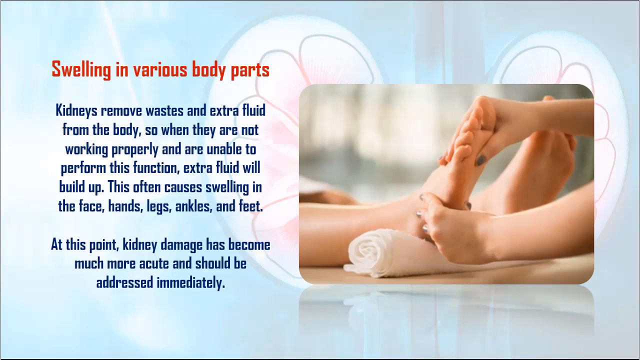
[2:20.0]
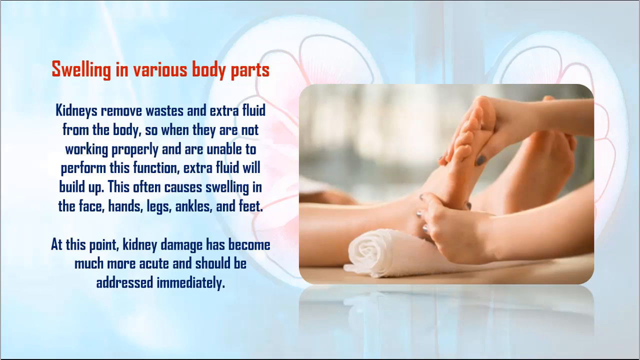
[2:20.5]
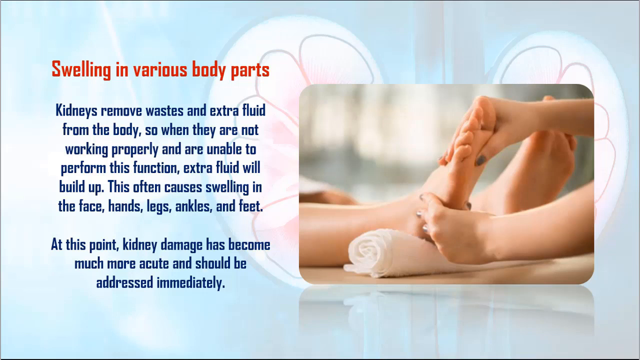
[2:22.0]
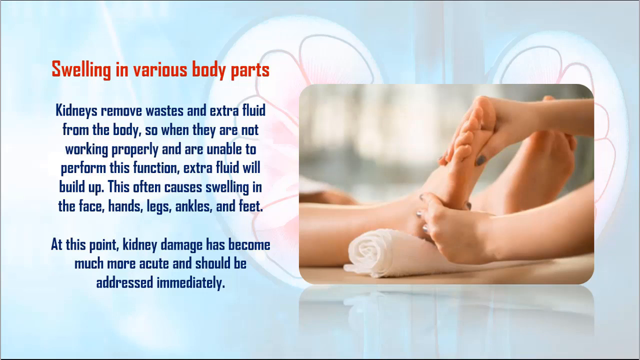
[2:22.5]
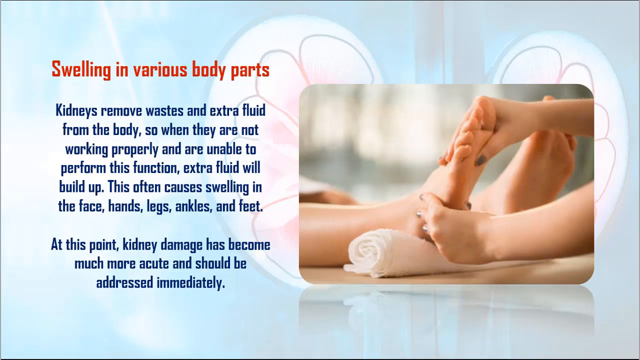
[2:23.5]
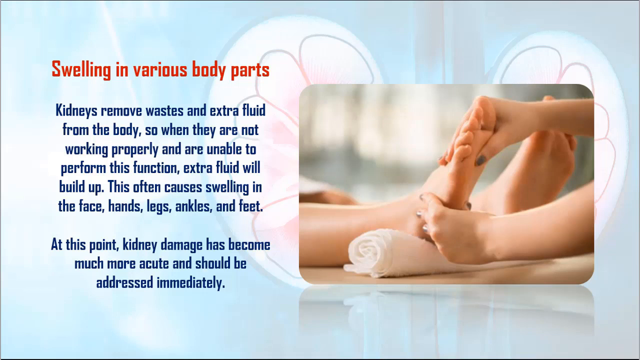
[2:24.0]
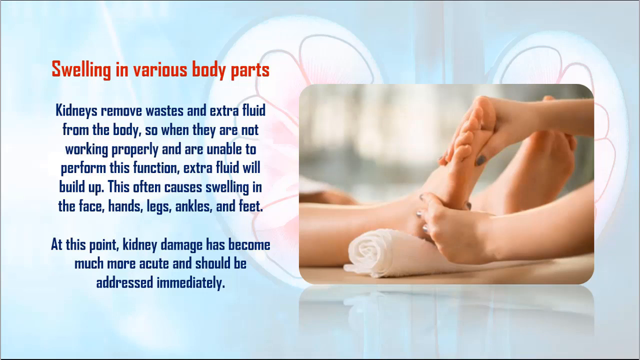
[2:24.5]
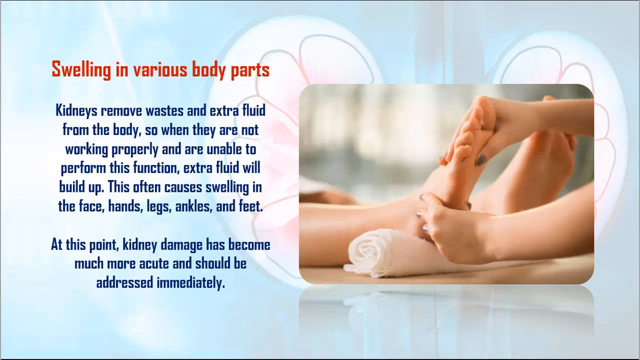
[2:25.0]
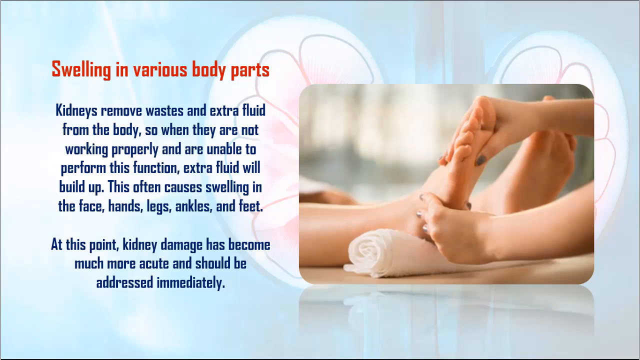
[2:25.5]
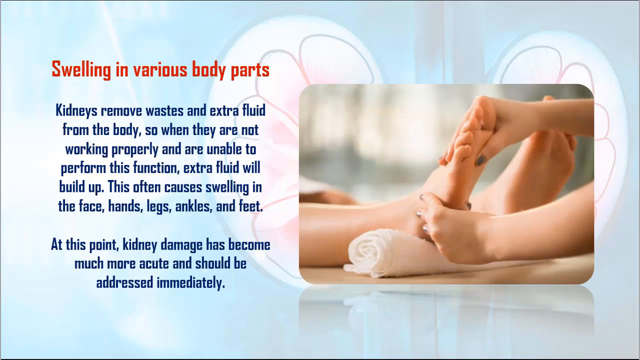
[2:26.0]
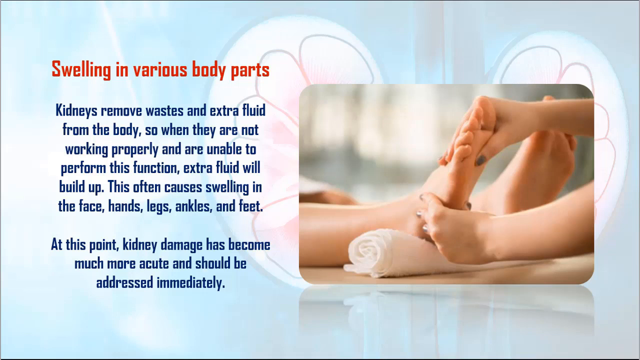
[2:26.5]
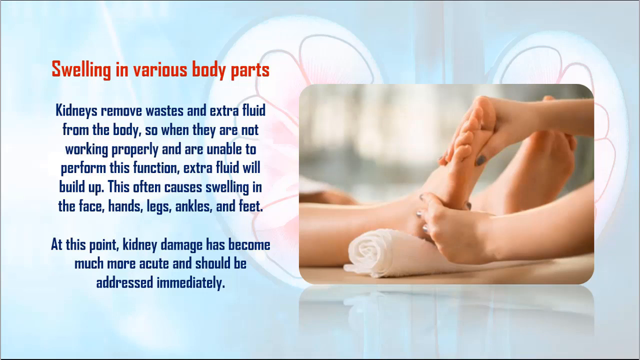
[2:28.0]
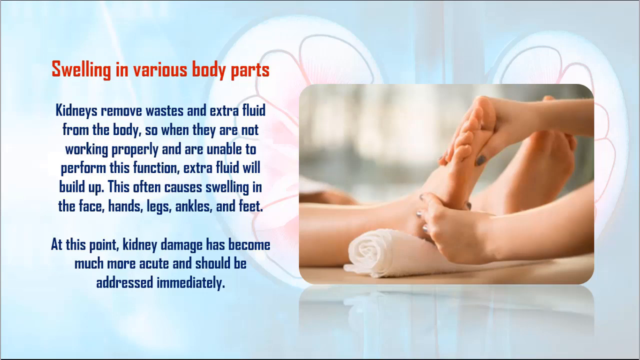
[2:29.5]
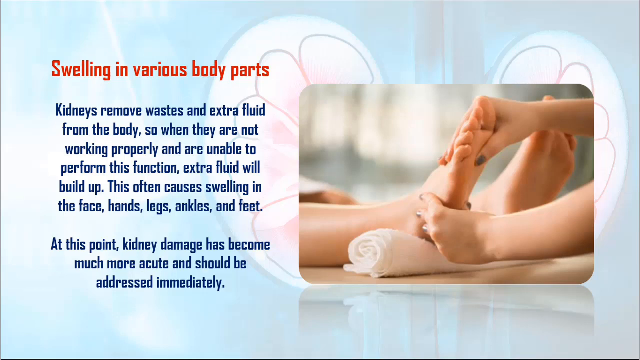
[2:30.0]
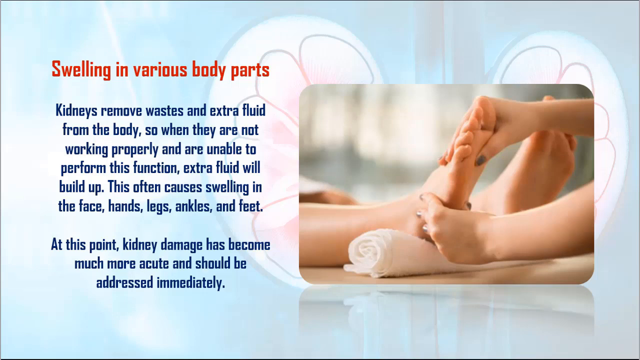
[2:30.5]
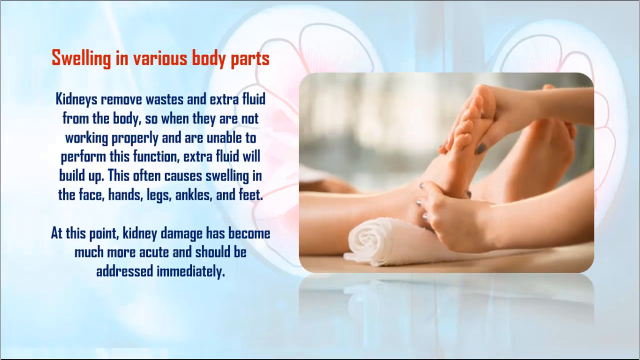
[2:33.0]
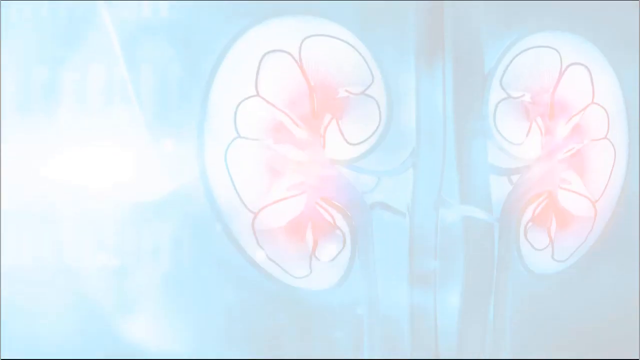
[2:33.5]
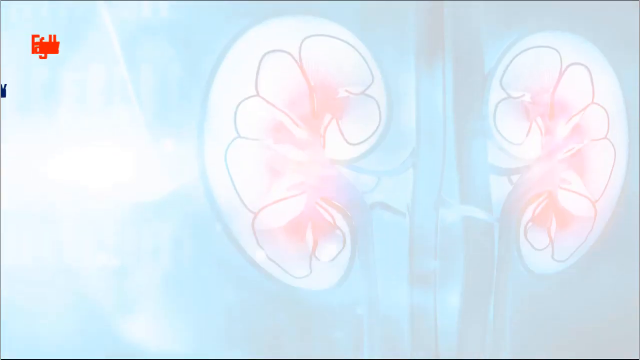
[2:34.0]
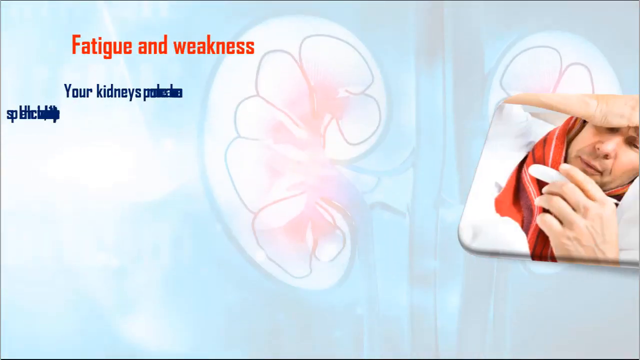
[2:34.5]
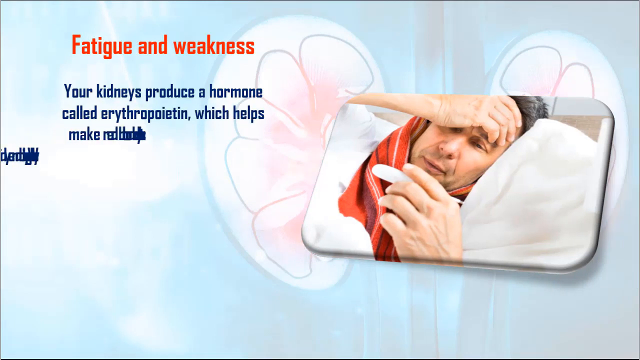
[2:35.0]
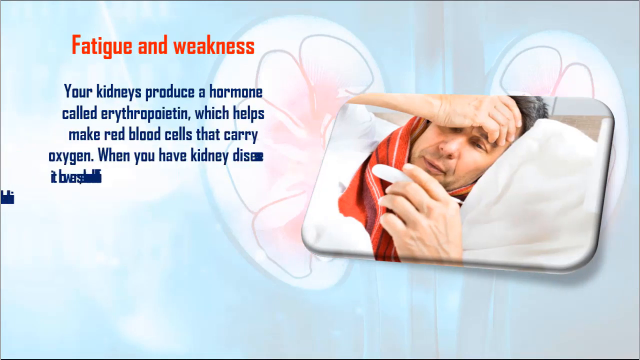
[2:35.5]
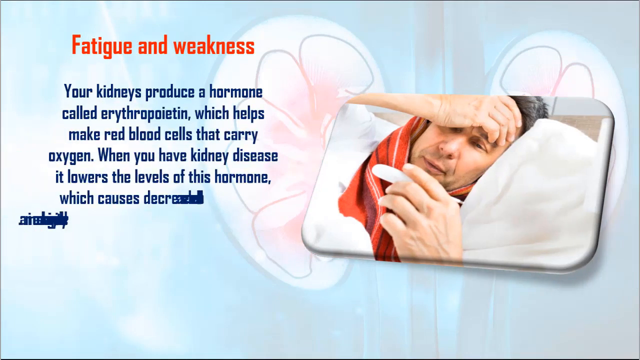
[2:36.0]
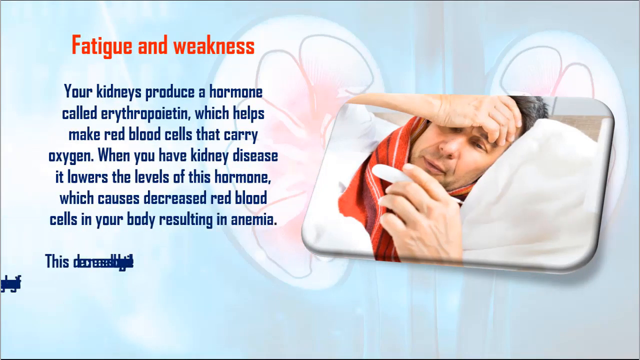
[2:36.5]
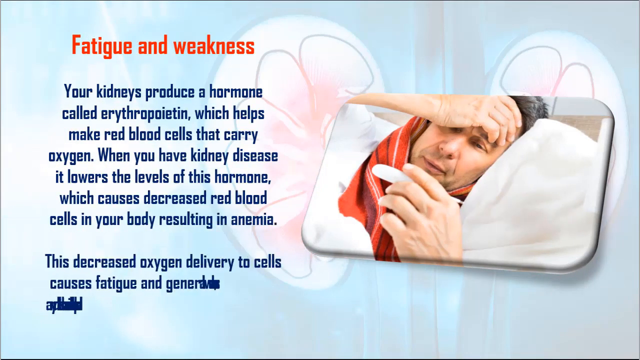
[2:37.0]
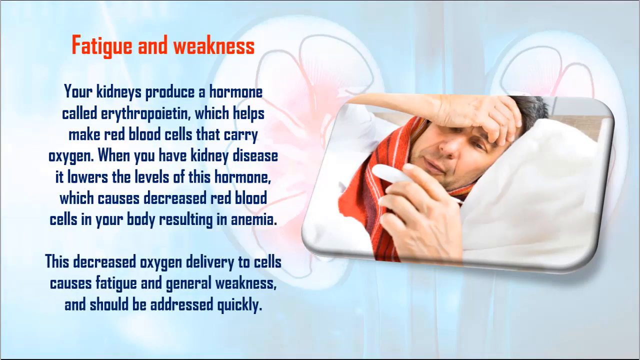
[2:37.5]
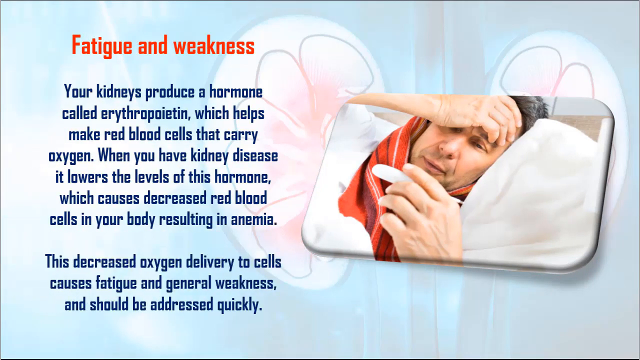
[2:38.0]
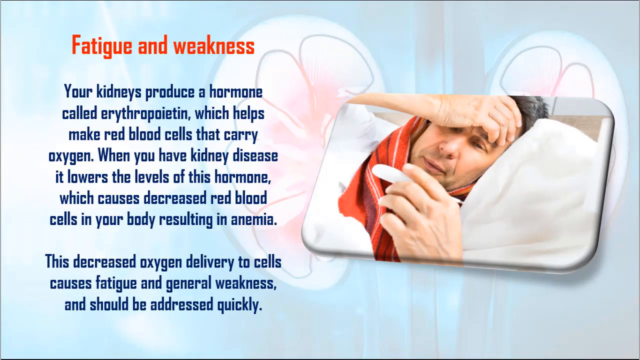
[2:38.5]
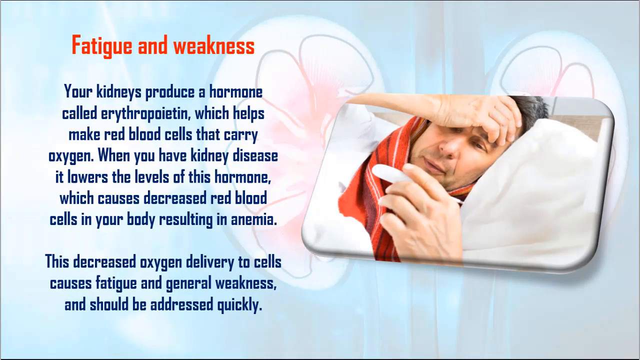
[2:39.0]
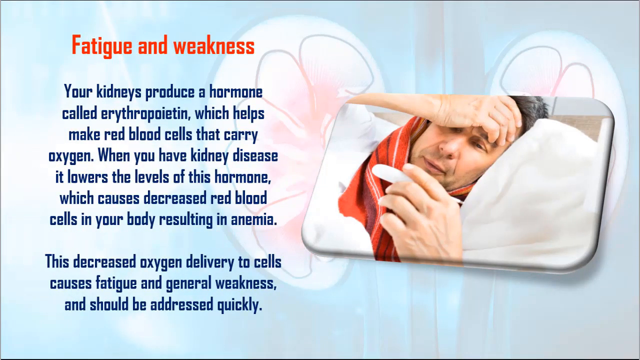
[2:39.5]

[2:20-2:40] A slide has a mostly blue background mixed with white, with drawings of two white kidneys in the background and two blue tubes in the center of them. There are black ovals within each kidney, with little sections of blue within the ovals. On the right side is a picture of a person getting their foot massaged: two feet are visible, soles showing, pointing to the right side of the image, and the lower calf of the person's right foot can just be made out. The right foot is on a rolled-up white towel. The upper hands of the massager, who is on the right side of the image, are visible, with the right hand on the top of the foot and the left hand on the heel. On the left side of the screen is text about how swelling in various body parts can be related to kidney failure and kidney dysfunction. After several seconds, the text and picture go away, and another picture and text slide onto the screen. On the right is a picture of a man in bed with a red towel with black and white stripes wrapped around his neck. He seems to be holding a white thermometer in his left hand and is looking at it. He looks sick and sad, and his right hand covers his forehead. To the left of the picture is a red title, "fatigue and weakness", and below it two paragraphs in blue explaining that the kidneys produce a hormone which helps make red blood cells that carry oxygen; kidney disease lowers the level of this hormone, which decreases red blood cells, resulting in anemia, and this decreased oxygen delivery to cells causes fatigue and general weakness.